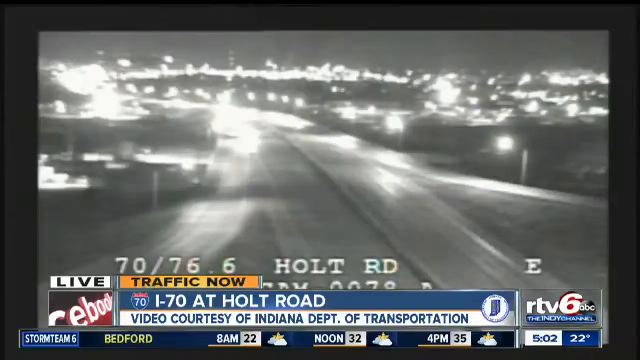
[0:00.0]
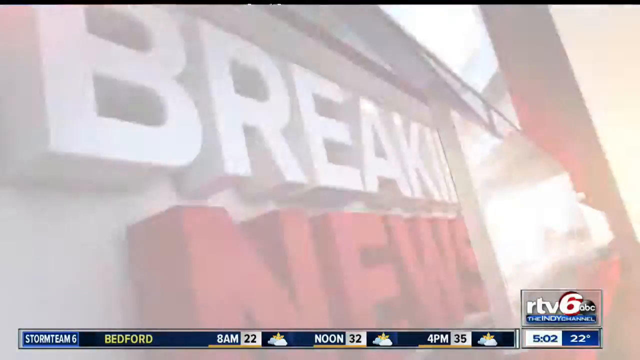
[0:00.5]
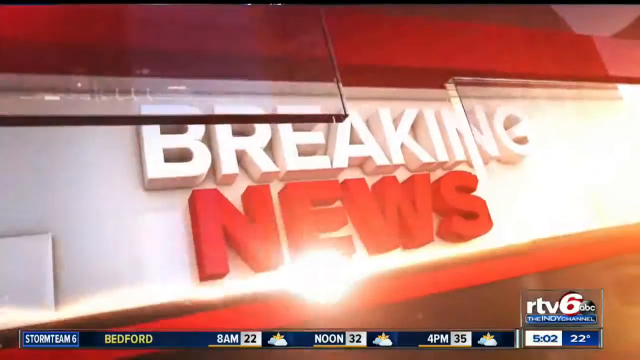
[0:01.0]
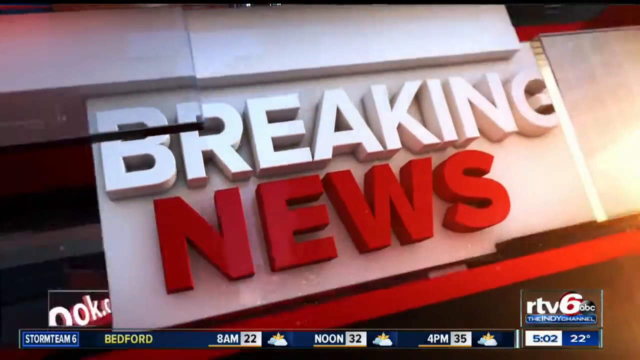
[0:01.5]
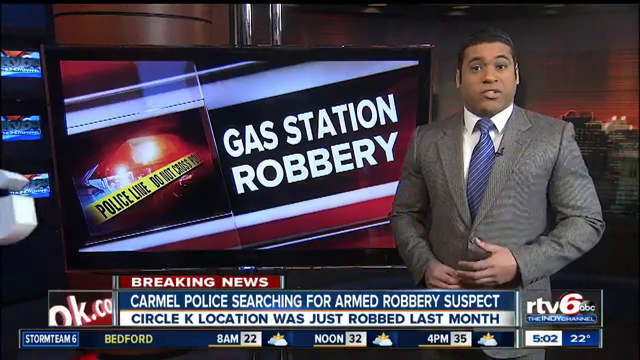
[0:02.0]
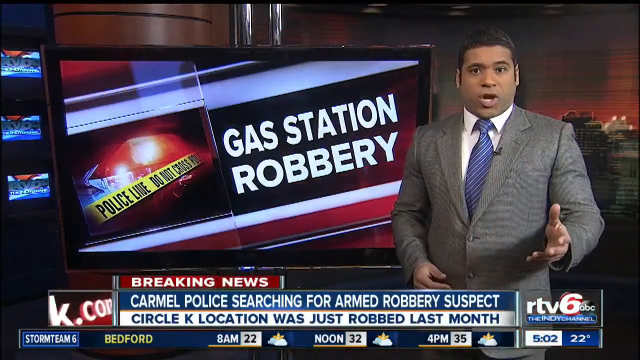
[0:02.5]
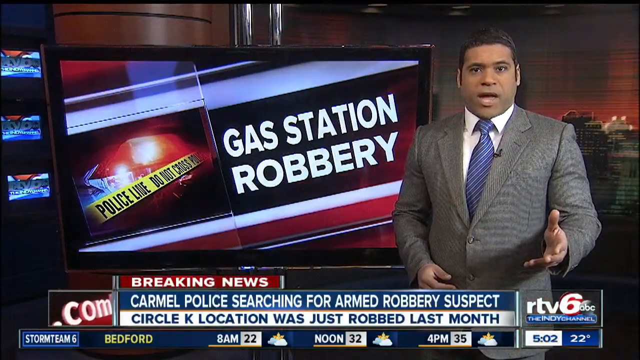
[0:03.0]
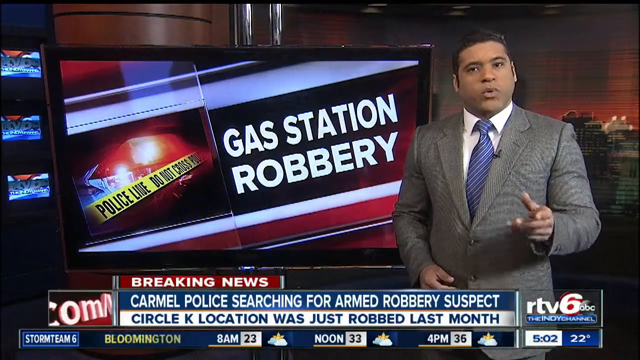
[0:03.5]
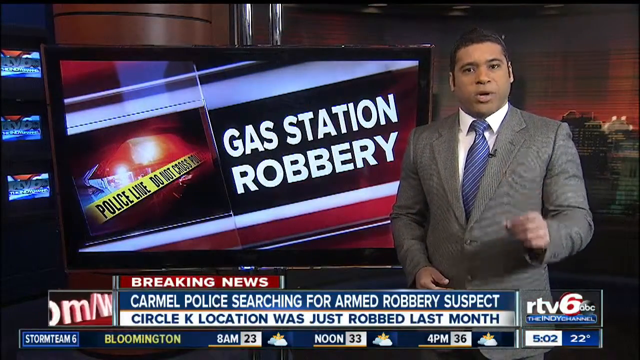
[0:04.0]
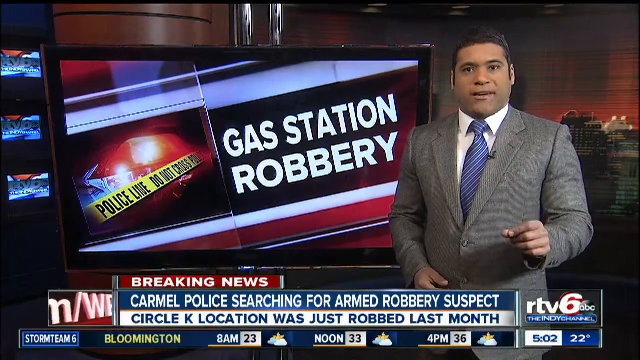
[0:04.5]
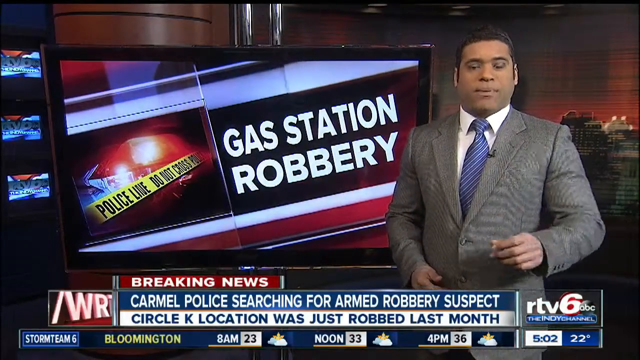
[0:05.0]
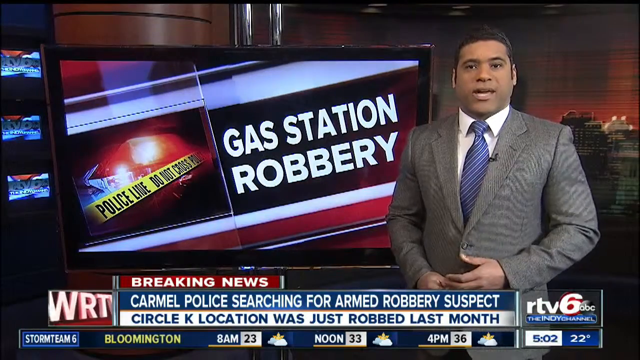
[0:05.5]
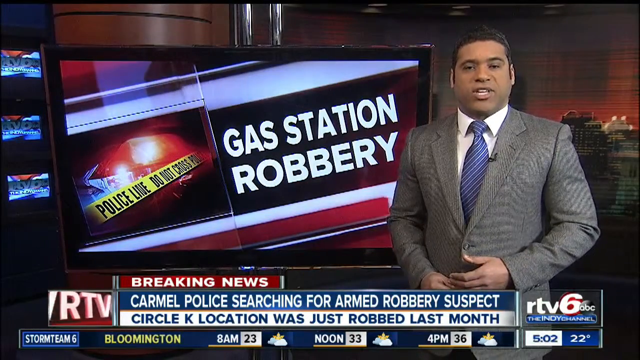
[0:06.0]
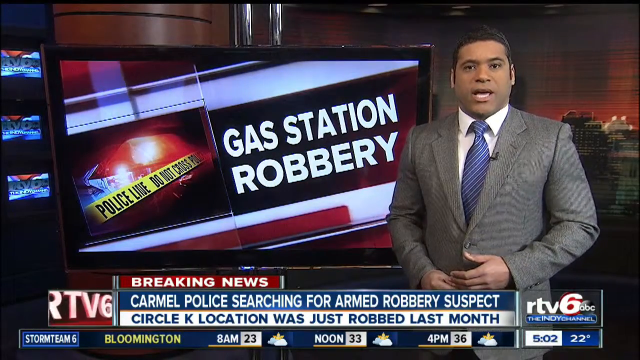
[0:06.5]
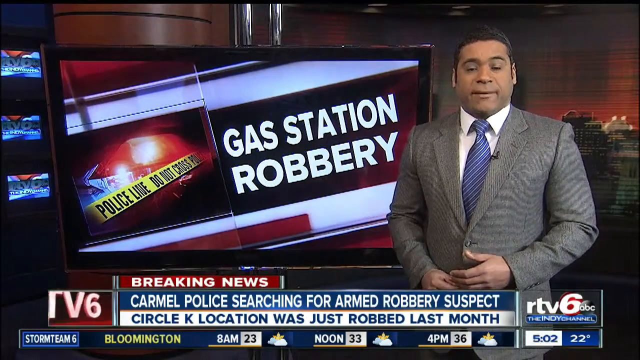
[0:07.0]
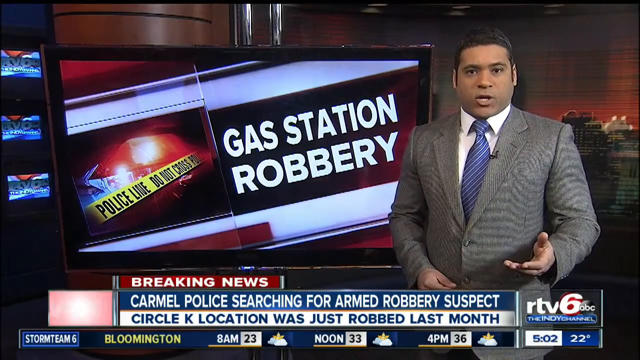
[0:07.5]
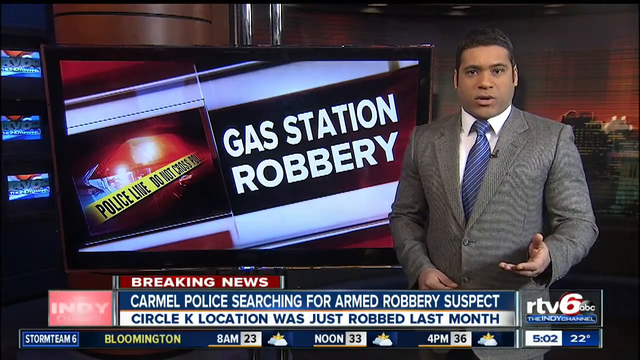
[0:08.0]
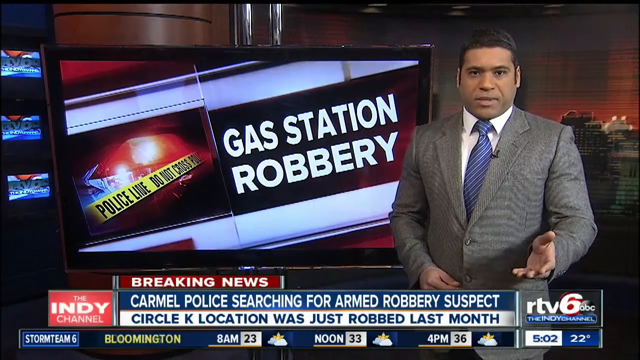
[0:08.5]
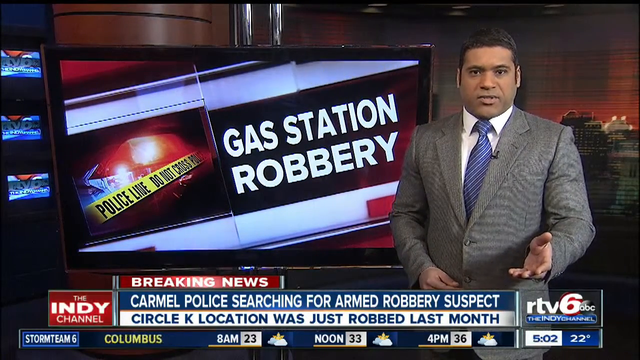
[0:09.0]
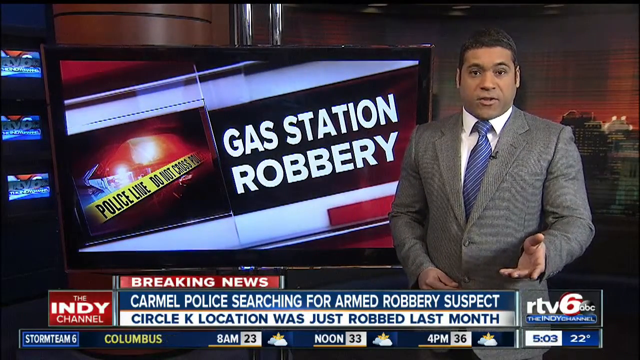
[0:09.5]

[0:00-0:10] The video opens on a black-and-white image, possibly dash cam footage, of a car going down a road. At the bottom left of the screen is the text "live," with "traffic now" to its right. Below that it reads "I-70 at Holt Road," and below that "video courtesy of Indiana Department of Transportation." At the bottom right of the screen is "RTV6 ABC." The view changes to a screen that says "breaking news," and then to a male news reporter standing on the right side of the screen, facing the camera, holding his left hand out toward the screen. In the center of the screen is a TV that reads "gas station robbery." Below it is the text "breaking news," then "Carmel Police Department searching for armed robbery suspect," and below that "Circle K location was just robbed last month." The man, dressed in a gray suit, is talking. He holds his left hand out, palm facing up, as if gesturing.